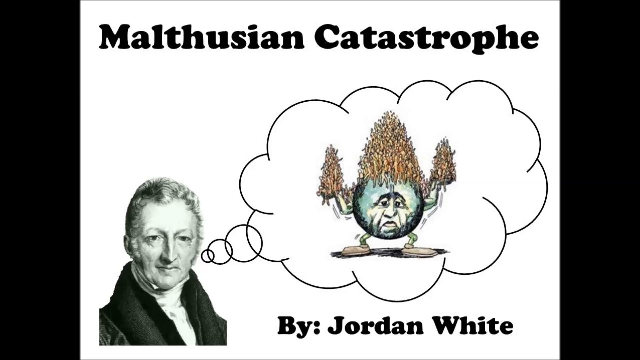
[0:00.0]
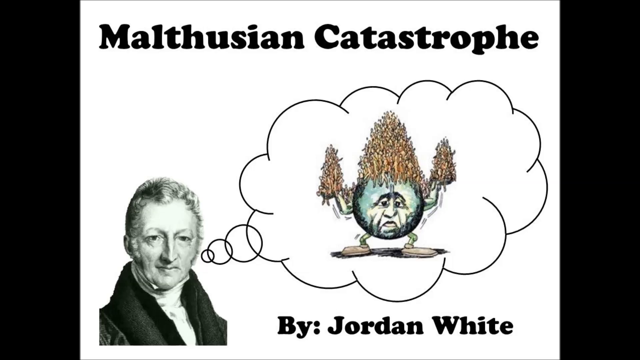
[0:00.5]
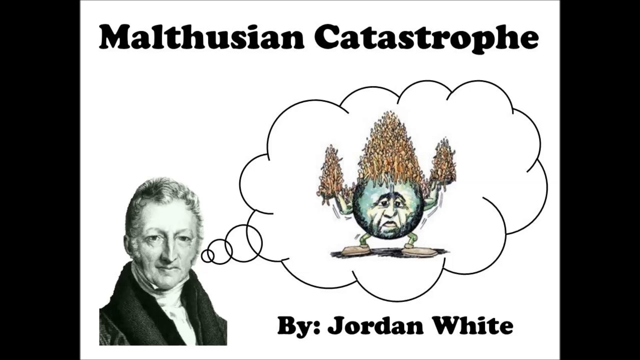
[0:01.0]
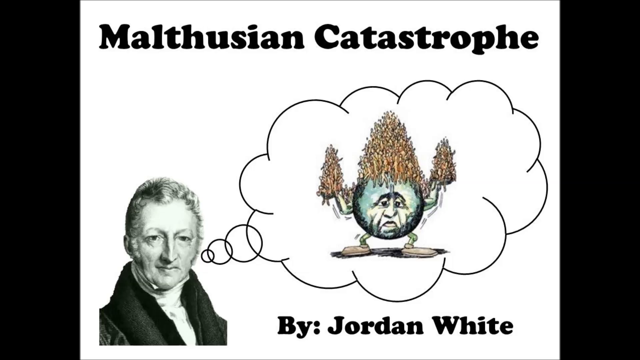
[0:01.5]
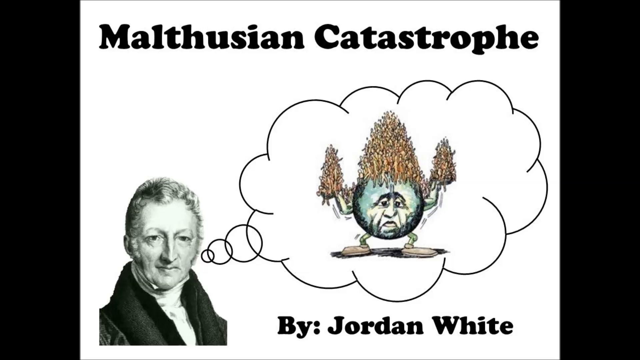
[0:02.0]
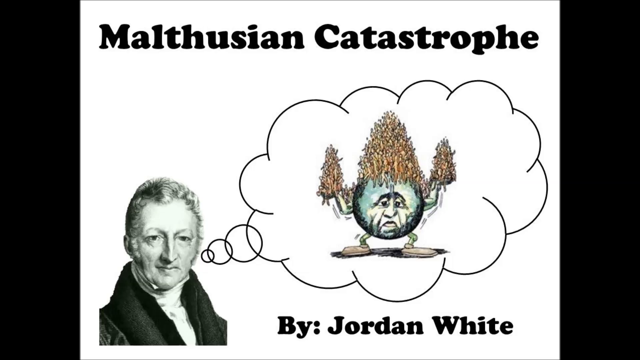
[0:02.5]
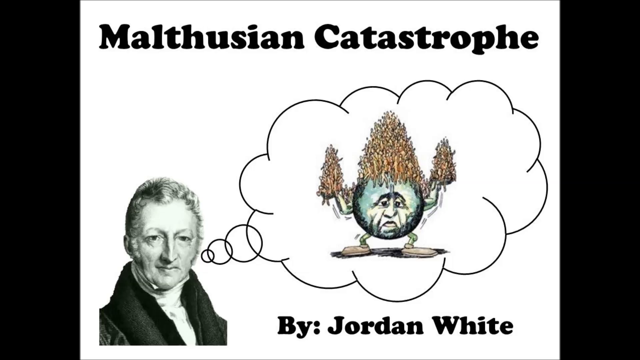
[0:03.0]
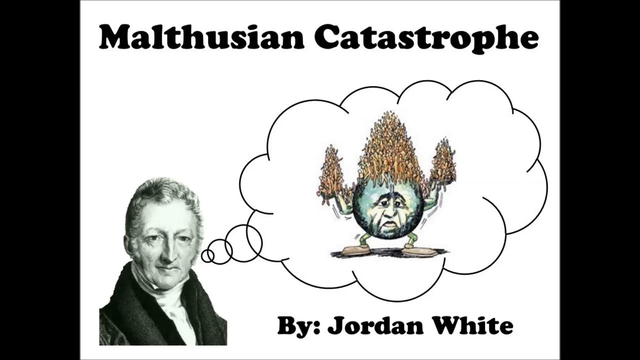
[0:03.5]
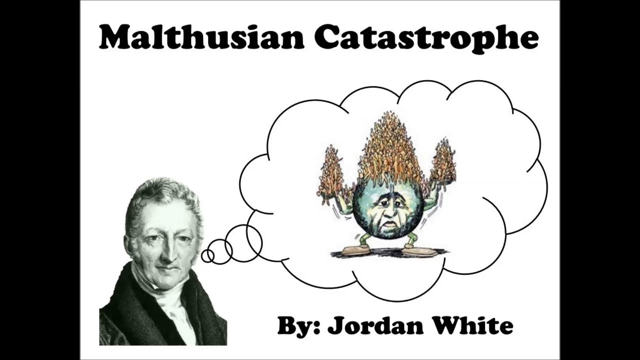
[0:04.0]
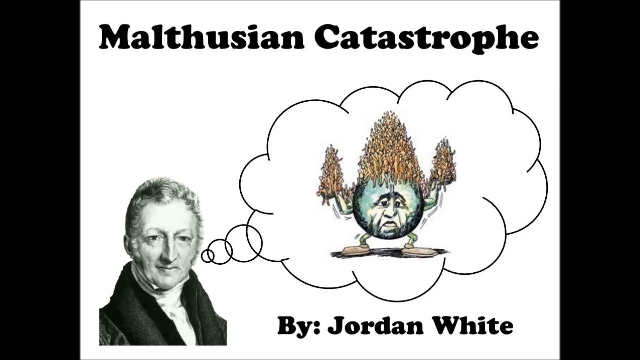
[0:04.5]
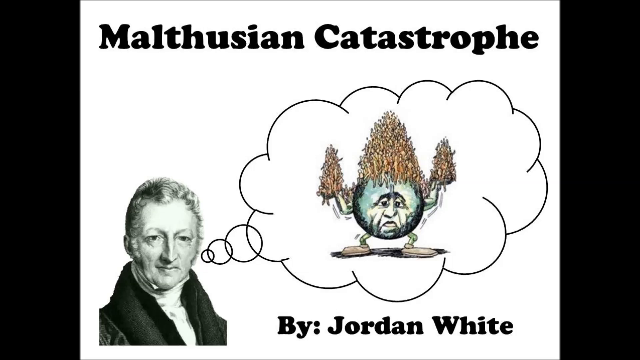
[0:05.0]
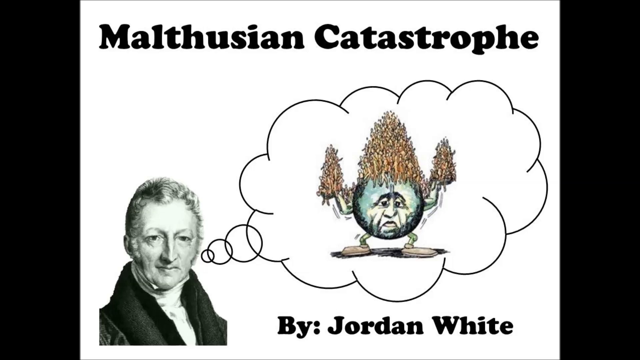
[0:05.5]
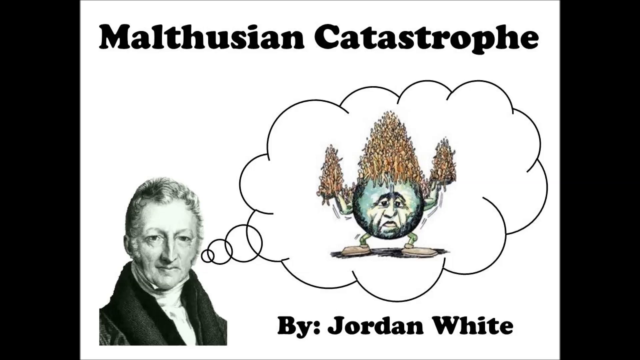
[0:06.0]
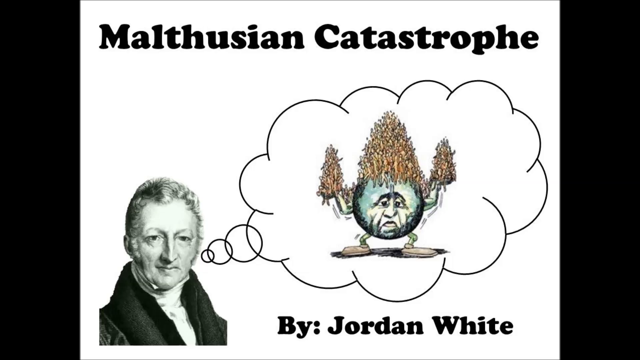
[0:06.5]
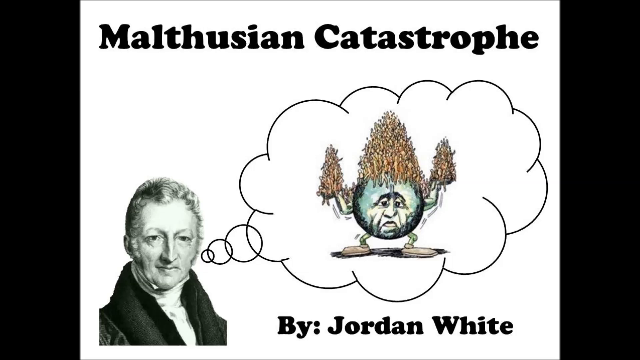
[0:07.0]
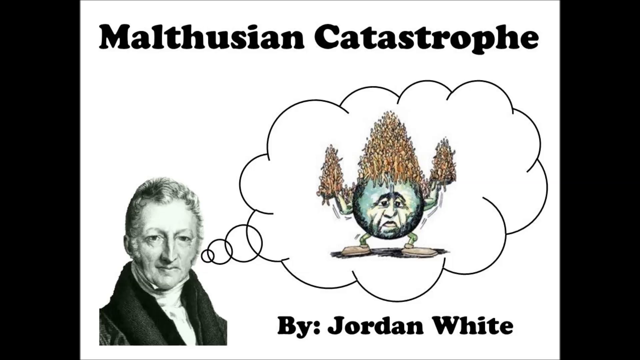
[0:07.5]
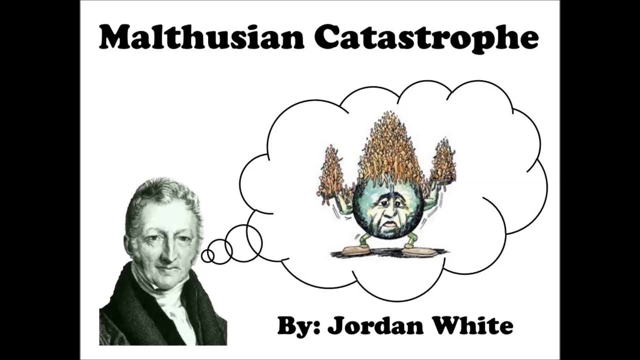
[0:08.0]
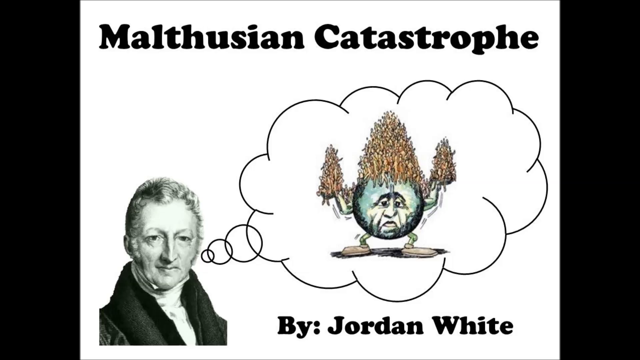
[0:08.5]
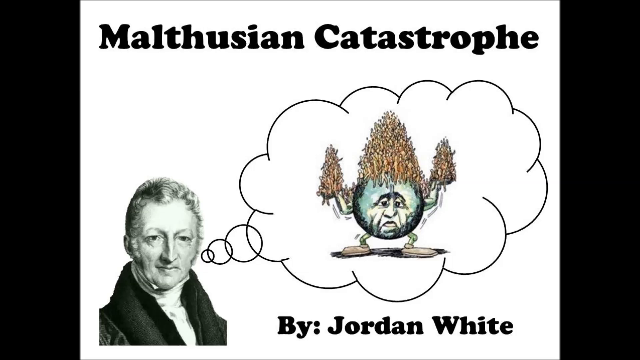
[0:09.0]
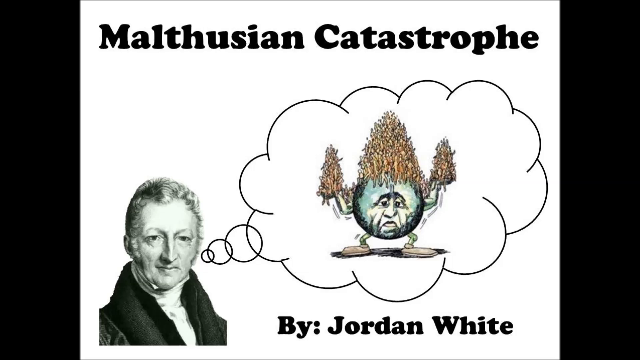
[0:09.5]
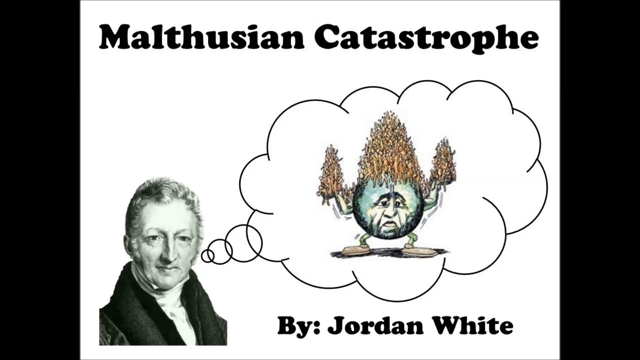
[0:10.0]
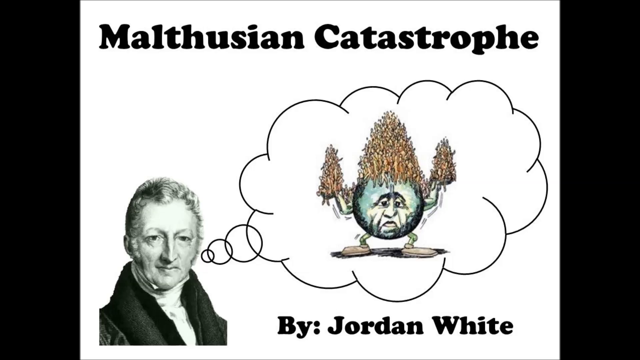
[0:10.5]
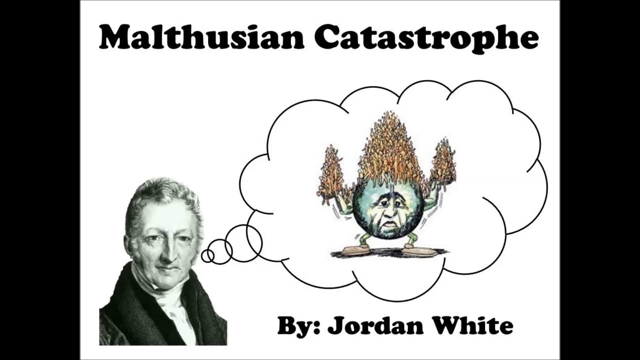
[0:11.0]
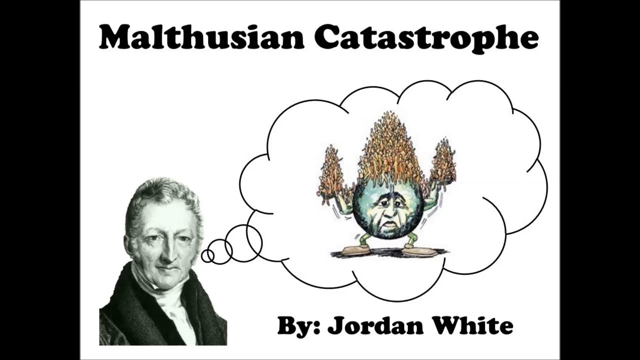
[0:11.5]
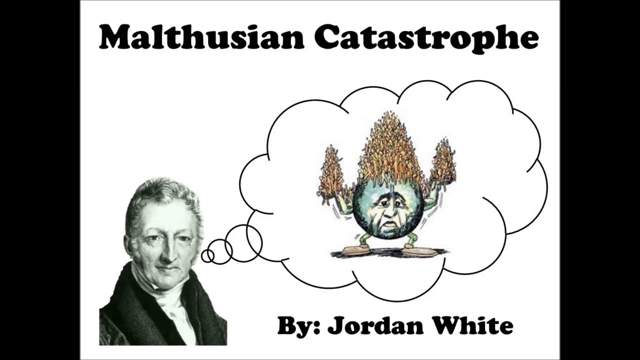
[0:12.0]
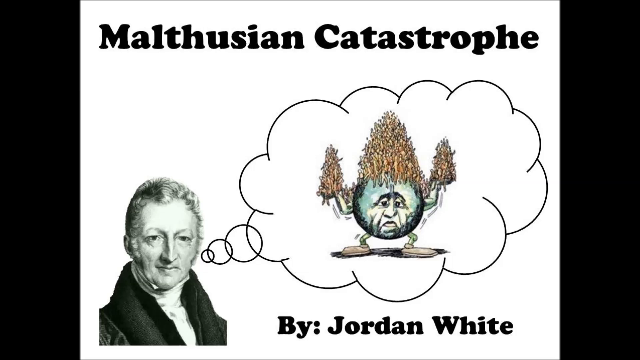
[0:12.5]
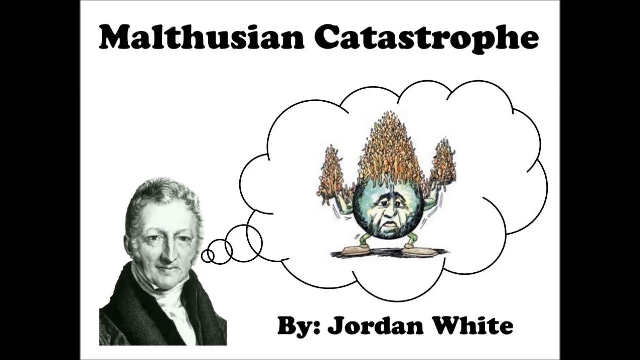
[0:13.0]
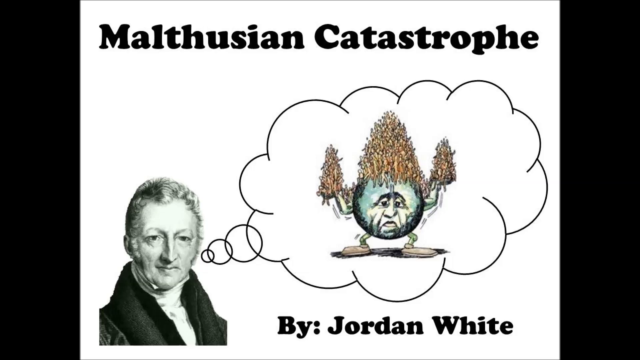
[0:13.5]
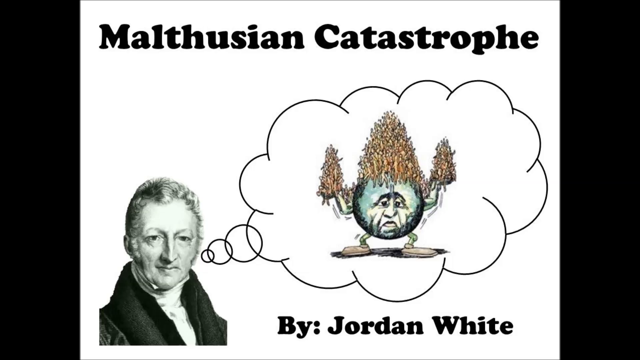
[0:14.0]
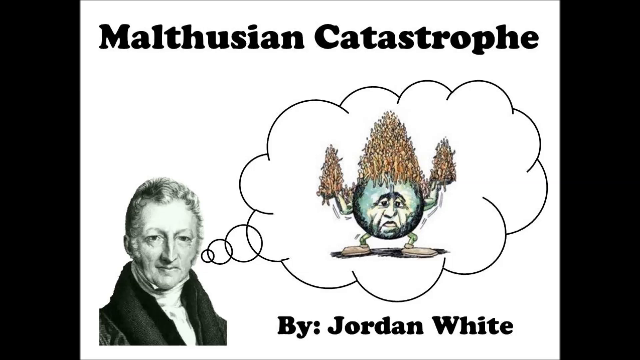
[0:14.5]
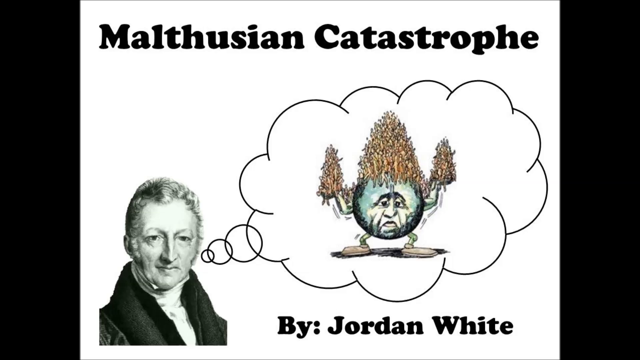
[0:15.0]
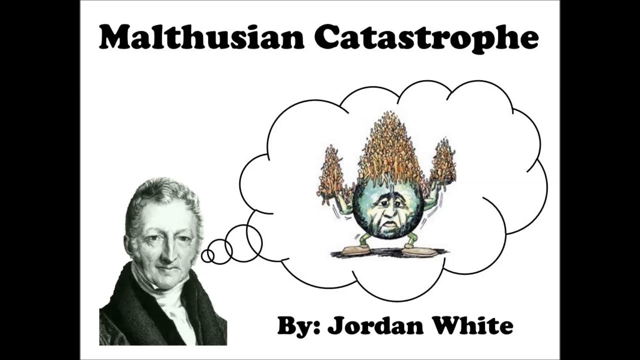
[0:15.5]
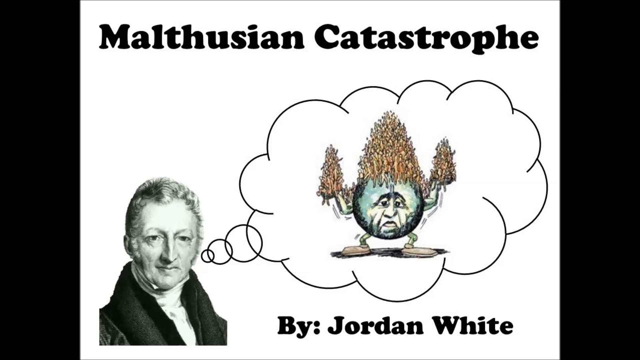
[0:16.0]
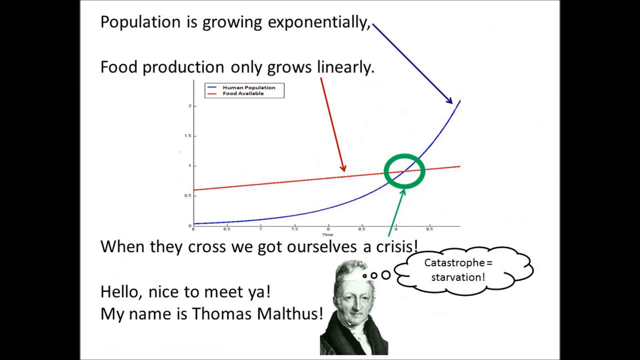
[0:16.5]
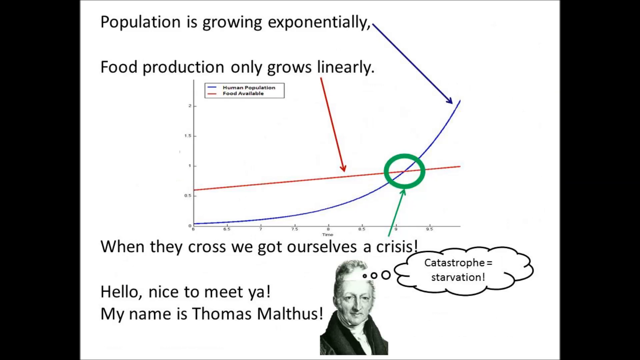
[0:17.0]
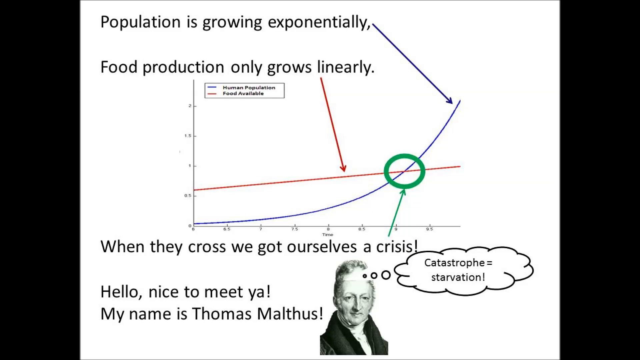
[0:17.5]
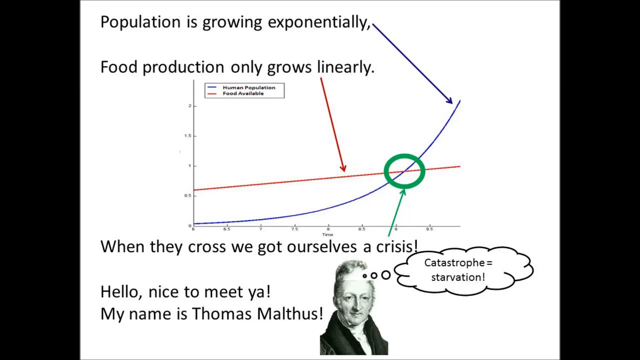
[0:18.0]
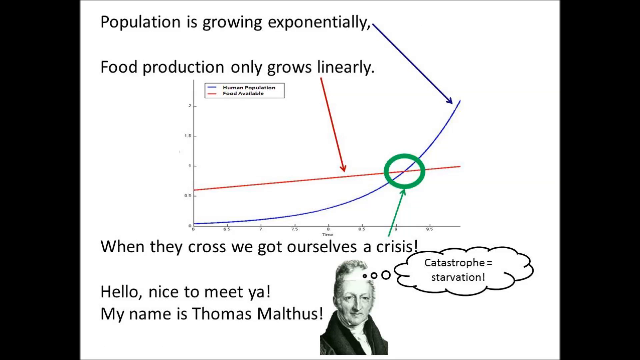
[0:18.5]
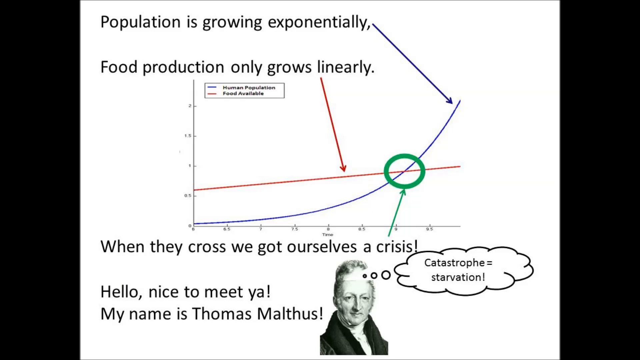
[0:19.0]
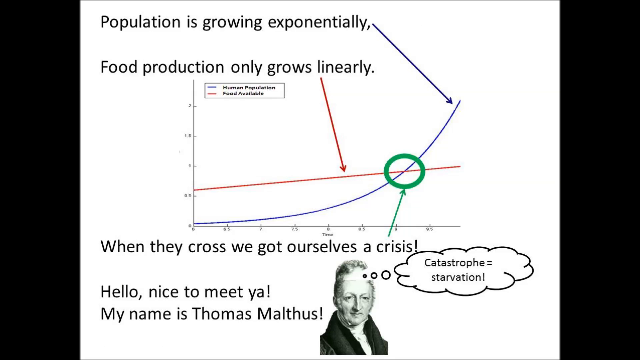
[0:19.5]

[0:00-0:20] The video opens on a black background, and a white box pops up in the middle of the screen. At the top of the box, written in black, are the words "Malthusian Catastrophe." Beneath this, on the lower left side of the screen, is a black-and-white pencil drawing of an older gentleman, shown only from his upper arms to the top of his head; he appears to wear a white turtleneck and a black jacket. Coming away from his mouth are three intertwined bubbles: the one closest to him is the smallest, the next is medium-sized, and the one beside that is larger, together forming a larger bubble that looks more like a cloud. Inside this bubble there appears to be a round figure whose face and body are combined into one circle, with two stick legs and feet pointed in opposite directions, and stick arms raised at its sides and bent at the elbow; it looks like it has leaves for hands and brown leaves for hair. Toward the bottom of the screen are the words "by Jordan White." Next, the text "the population is growing exponentially" appears at the top of the screen, with "food production only grows linearly" beneath it. A graph is in the middle of the screen, and beneath it are the words "when they cross, we got ourselves a crisis." The text "Hello, nice to meet you. My name is Thomas Malthus." appears, and in the bubbles above his head is the idea that catastrophe equals starvation.